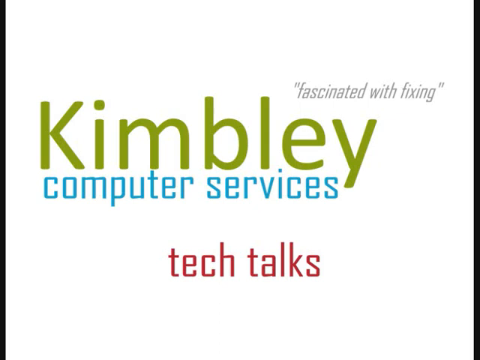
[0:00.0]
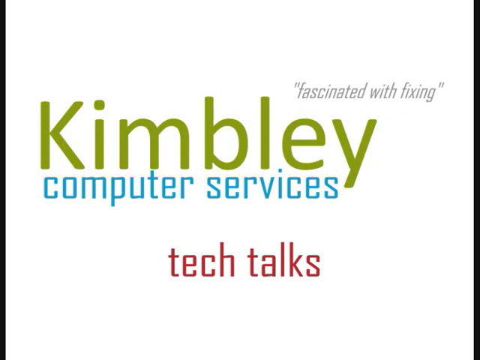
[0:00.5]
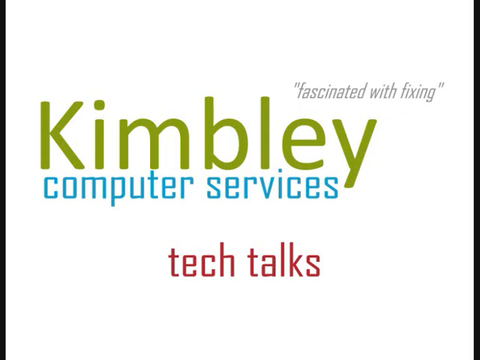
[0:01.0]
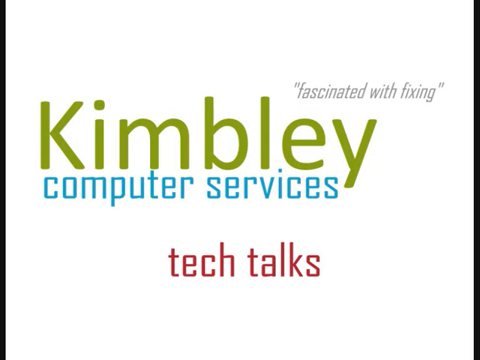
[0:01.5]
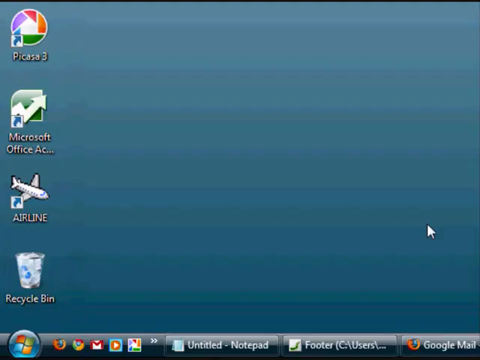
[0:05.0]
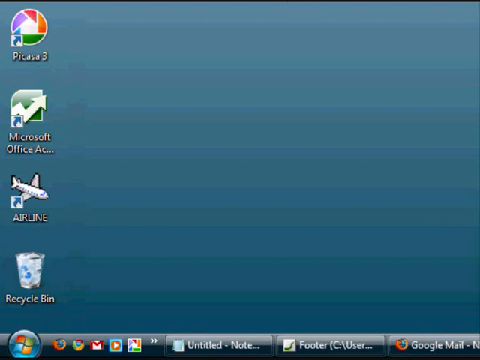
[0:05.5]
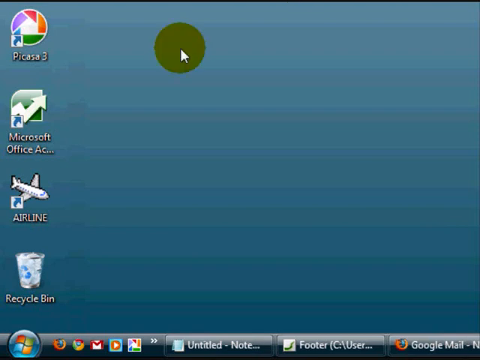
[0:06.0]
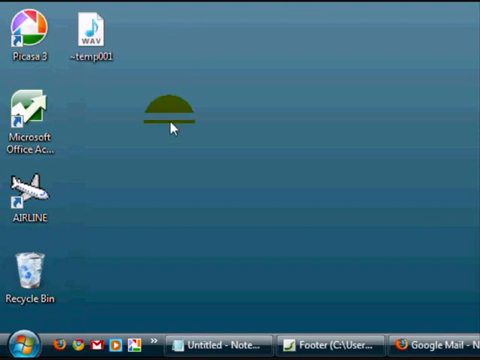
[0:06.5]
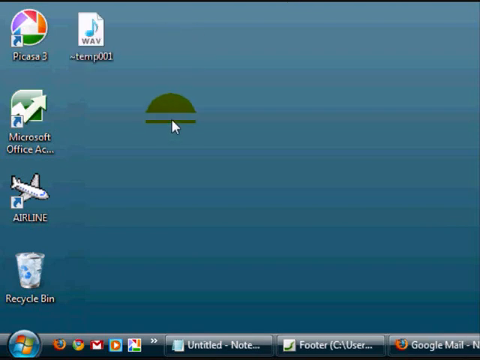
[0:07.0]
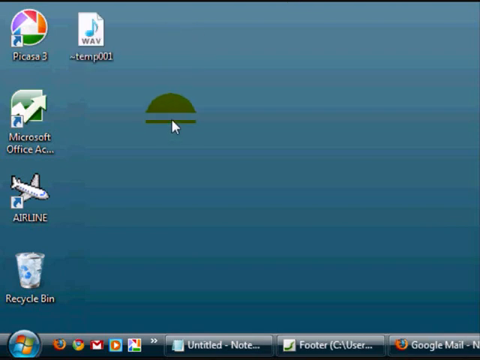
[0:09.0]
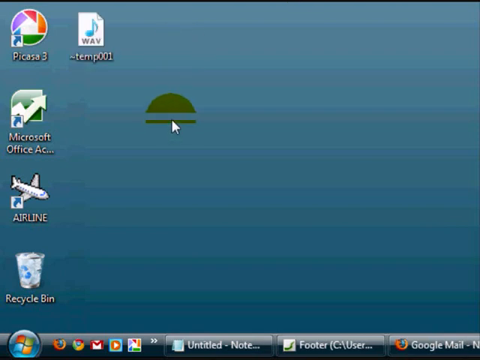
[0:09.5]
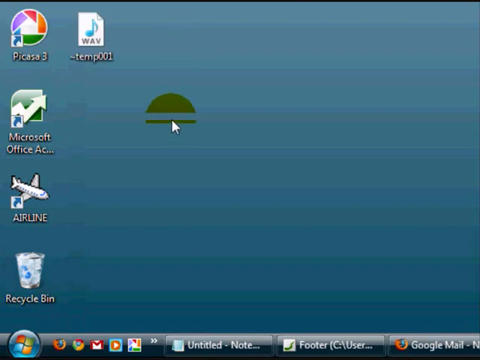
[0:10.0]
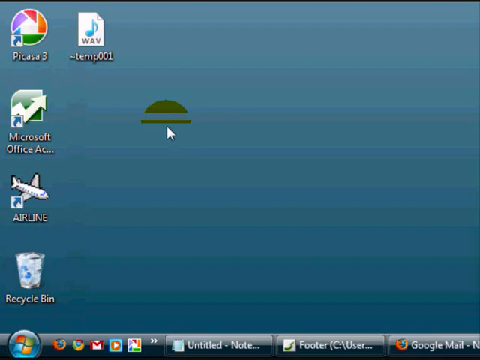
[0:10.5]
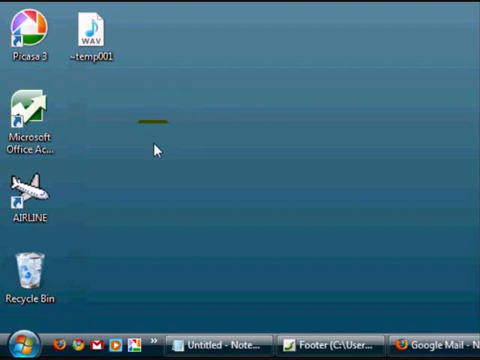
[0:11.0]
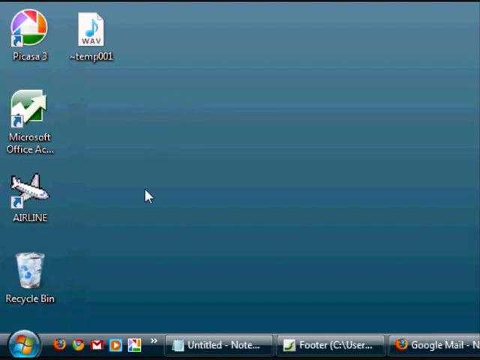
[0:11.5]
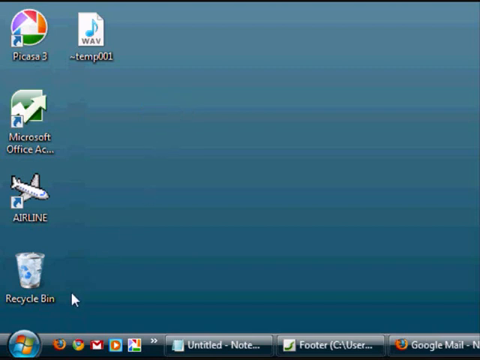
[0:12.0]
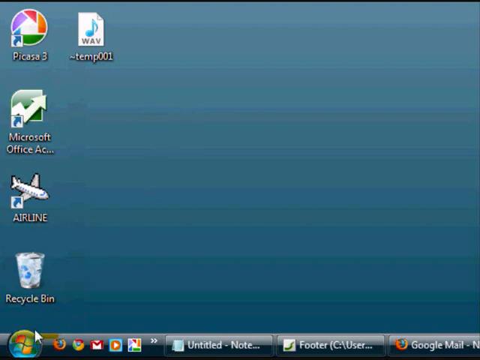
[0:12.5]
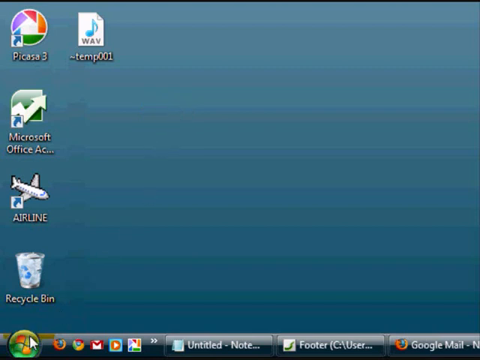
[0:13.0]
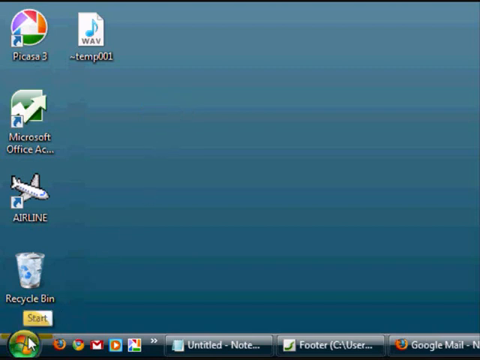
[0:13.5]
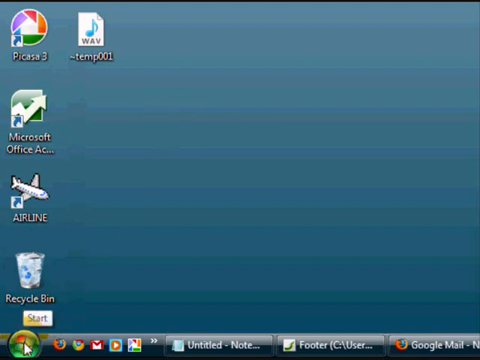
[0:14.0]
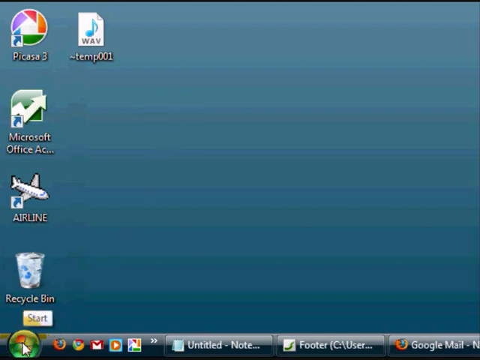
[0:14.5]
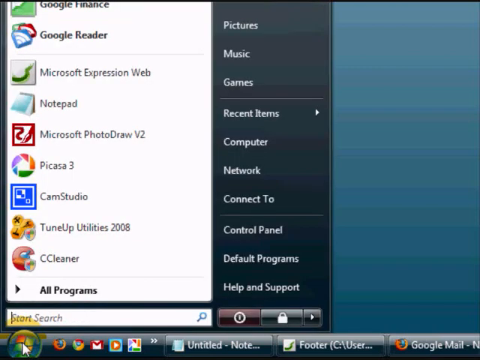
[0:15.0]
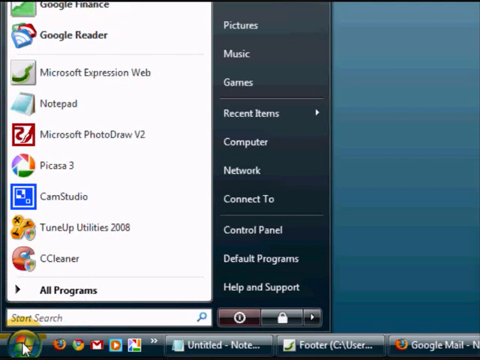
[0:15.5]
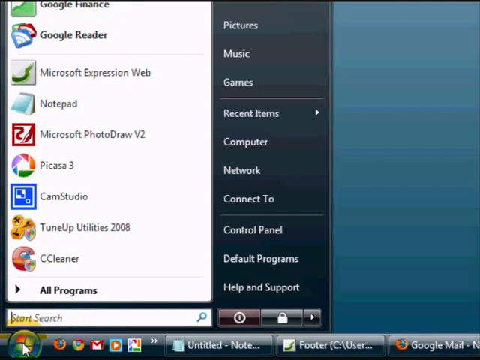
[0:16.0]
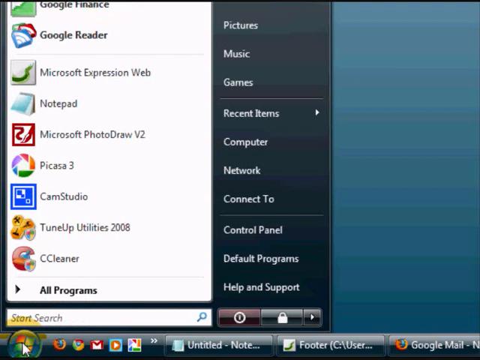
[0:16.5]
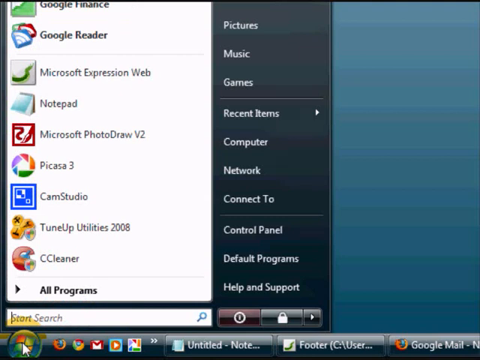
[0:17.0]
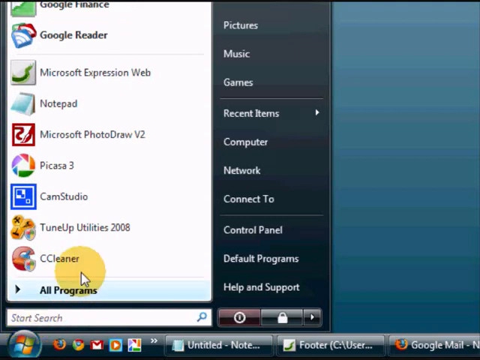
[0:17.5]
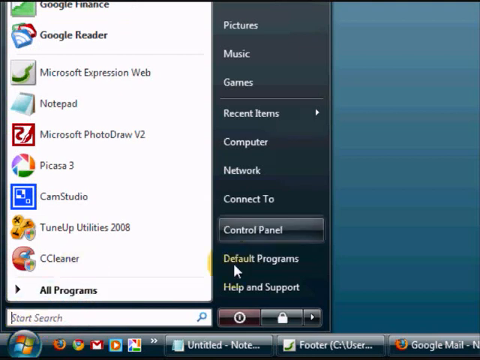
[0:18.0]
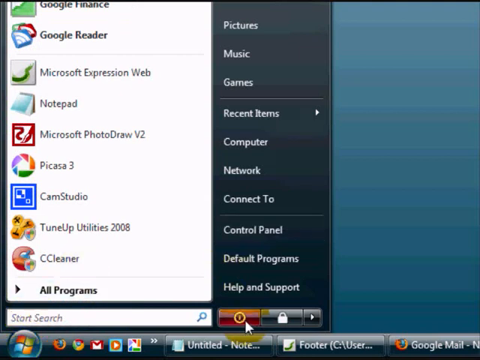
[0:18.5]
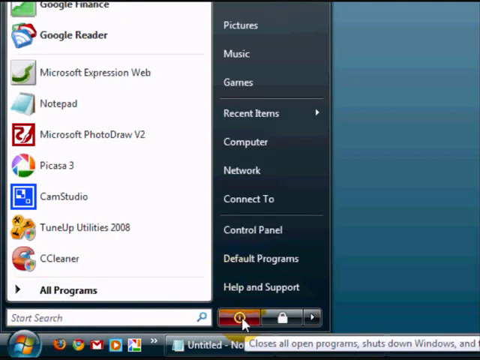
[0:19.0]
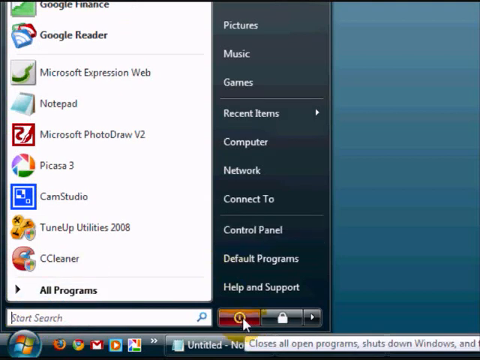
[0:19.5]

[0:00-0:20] The video opens on a white background, with the left and right sides of the screen black. Text reads "fascinating with fixing." Below and to the left of this, "Kimberly" appears in green letters, with "Kimberly" capitalized. Below that, "computer services" appears in blue letters, and below that, "tech talks" in red letters. The video then cuts to a computer home screen, with the left and right sides still black. On it are a Picasa 3 app, Microsoft Office, an airline app, a recycle bin, and a Temp 001 app. The computer pointer points to the right of these, and a small green thing appears and then disappears as the pointer moves to the bottom. The pointer goes to the Start menu, clicks on it, and moves over to something beginning with "Close all."